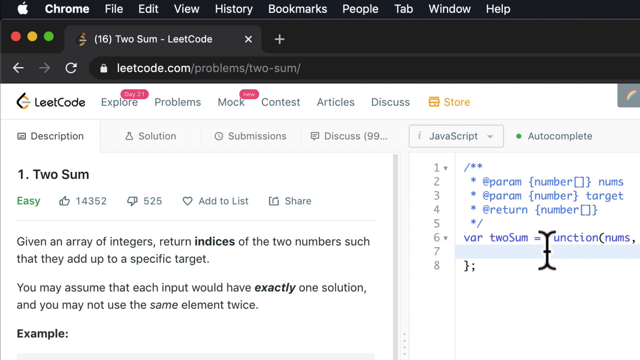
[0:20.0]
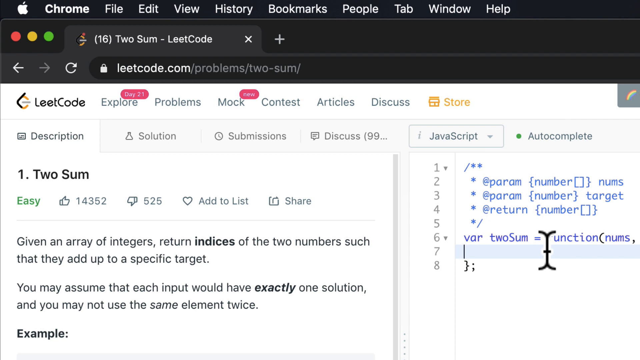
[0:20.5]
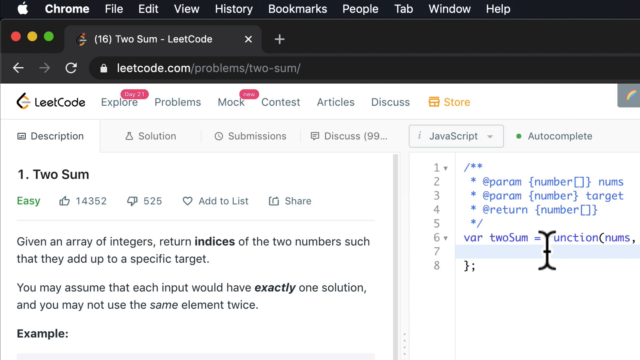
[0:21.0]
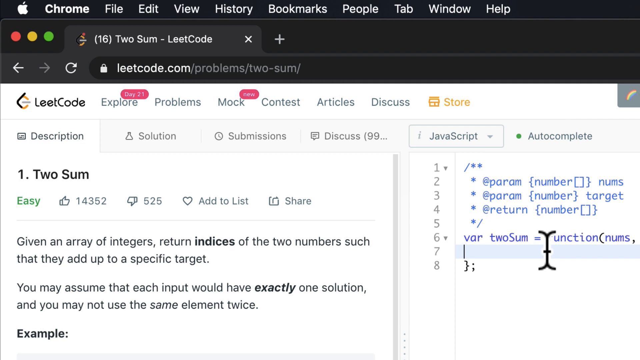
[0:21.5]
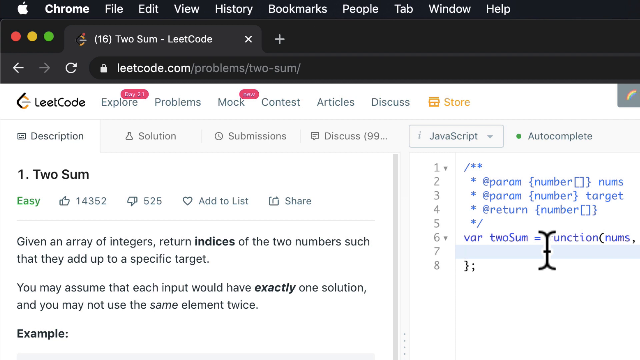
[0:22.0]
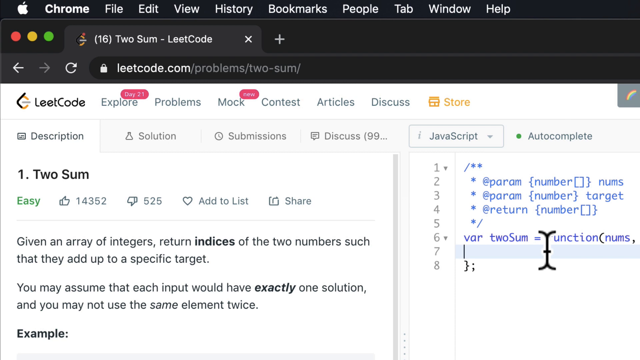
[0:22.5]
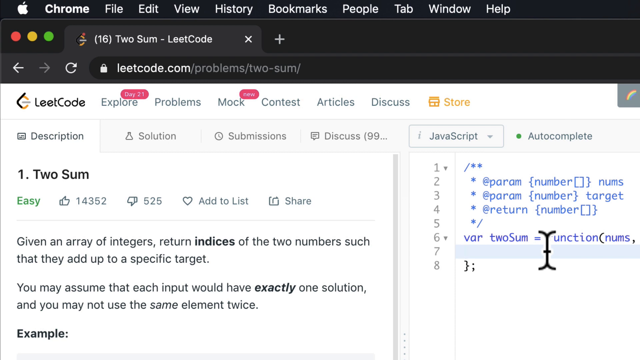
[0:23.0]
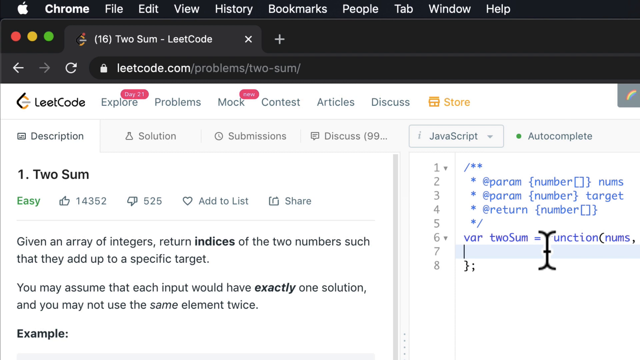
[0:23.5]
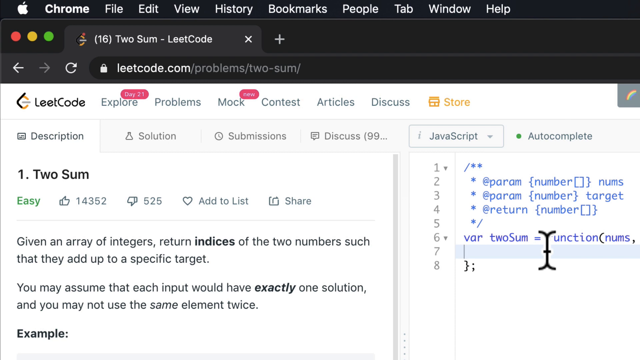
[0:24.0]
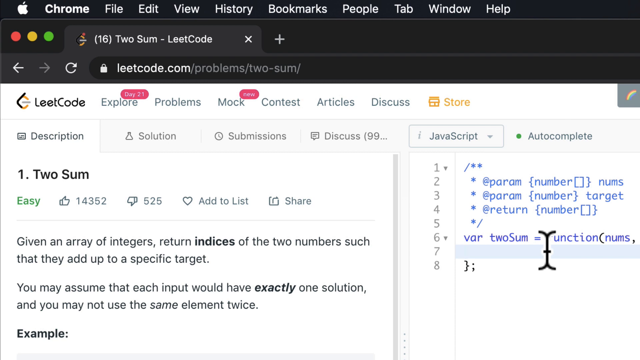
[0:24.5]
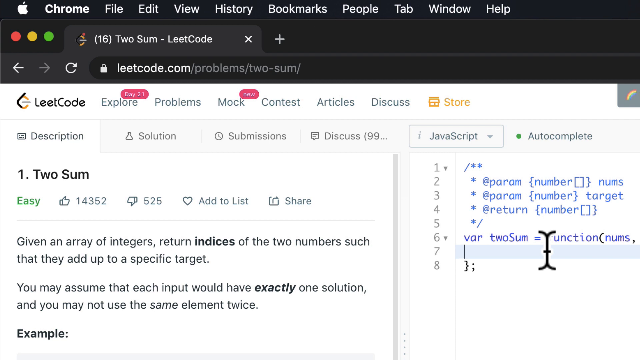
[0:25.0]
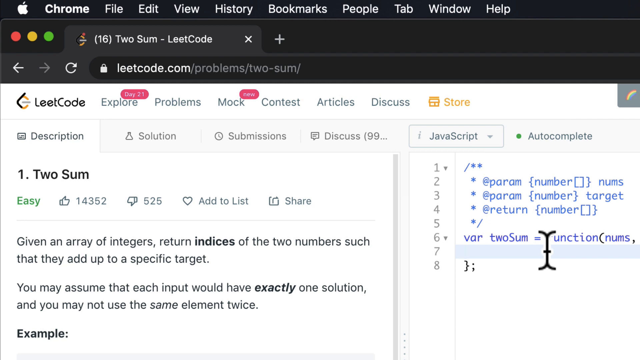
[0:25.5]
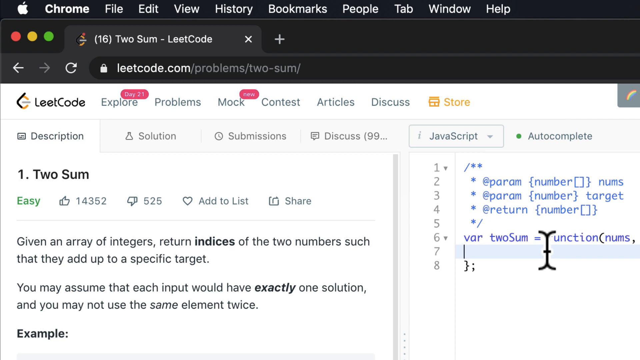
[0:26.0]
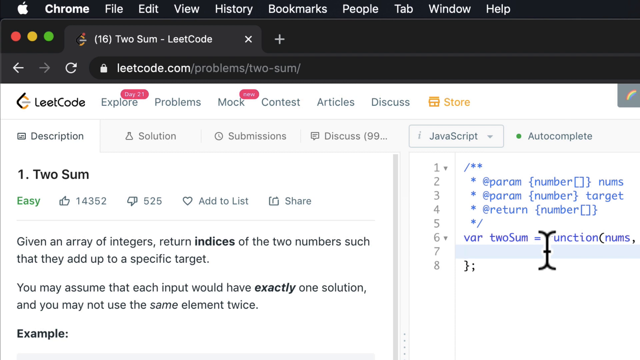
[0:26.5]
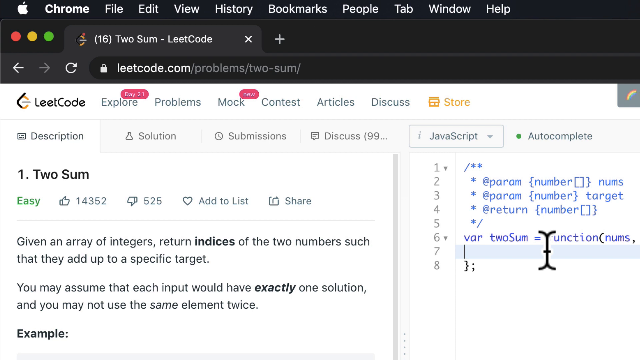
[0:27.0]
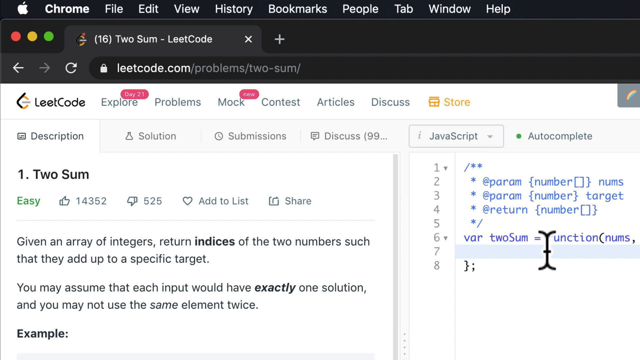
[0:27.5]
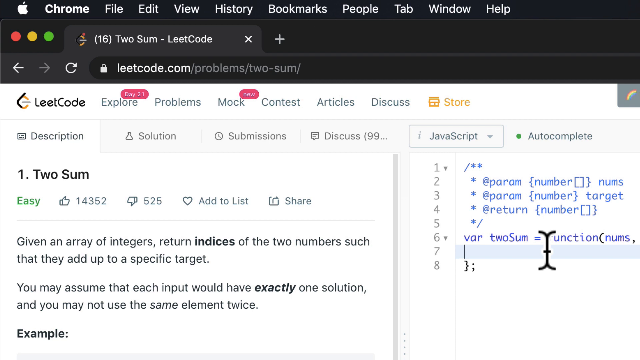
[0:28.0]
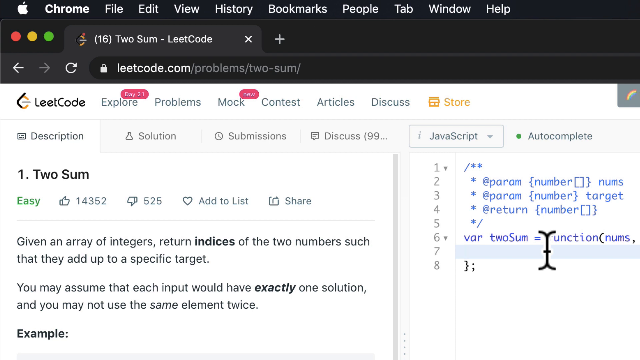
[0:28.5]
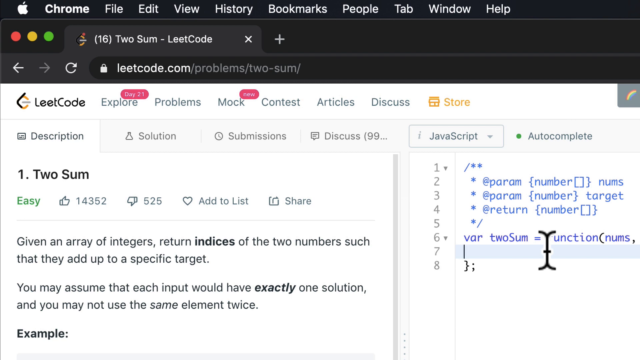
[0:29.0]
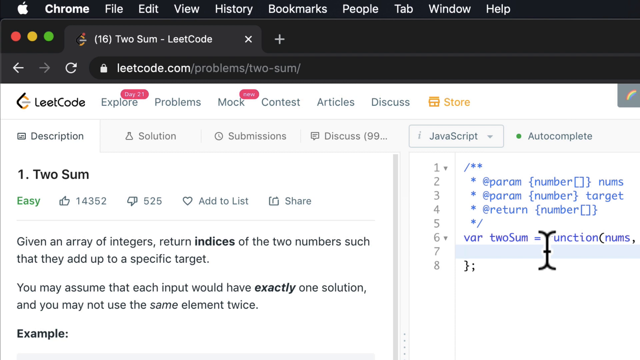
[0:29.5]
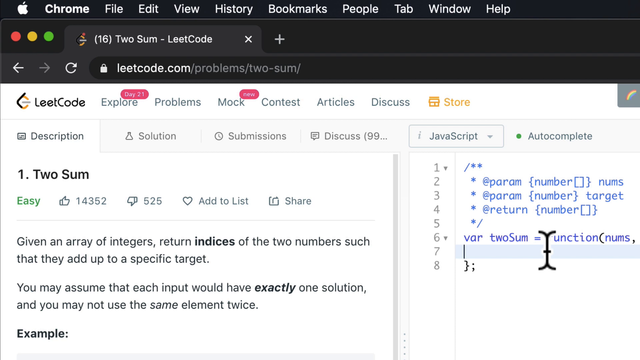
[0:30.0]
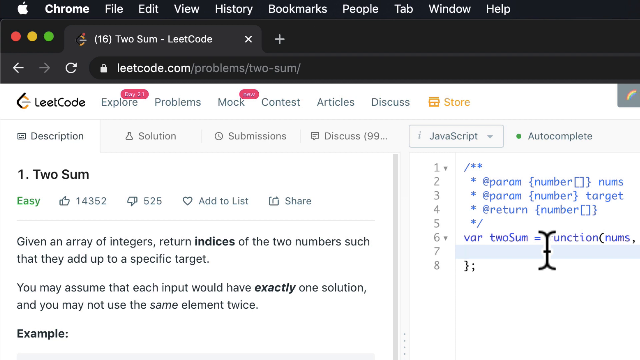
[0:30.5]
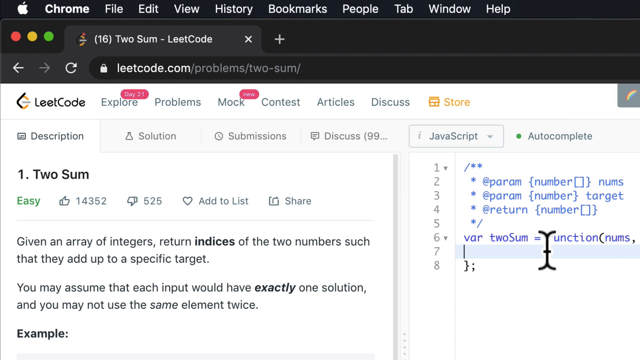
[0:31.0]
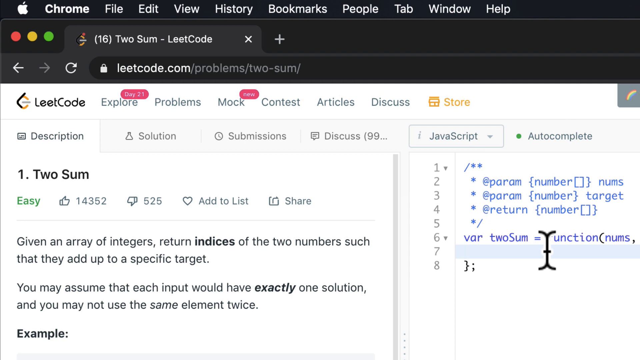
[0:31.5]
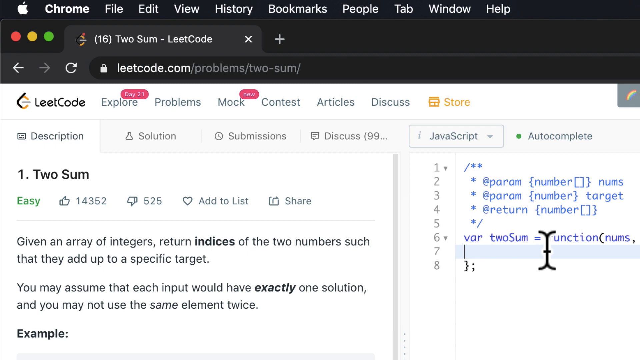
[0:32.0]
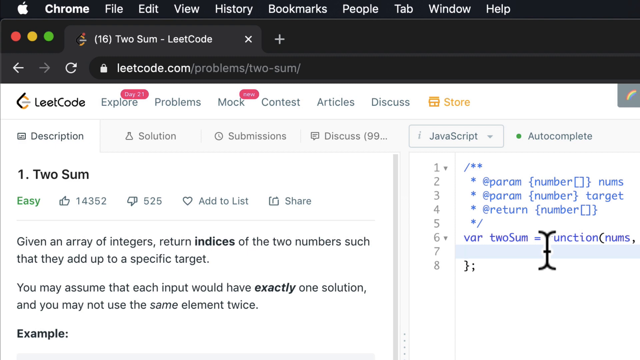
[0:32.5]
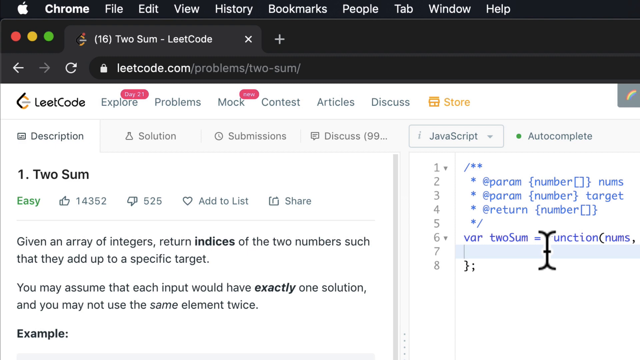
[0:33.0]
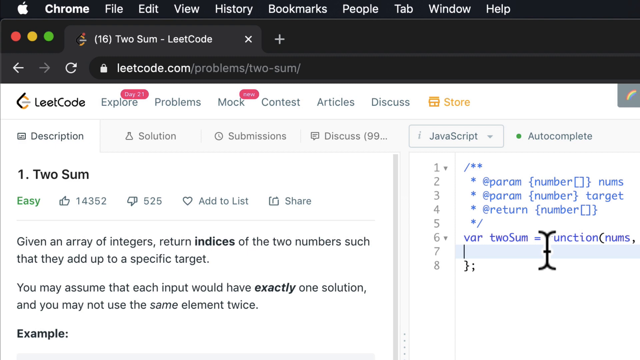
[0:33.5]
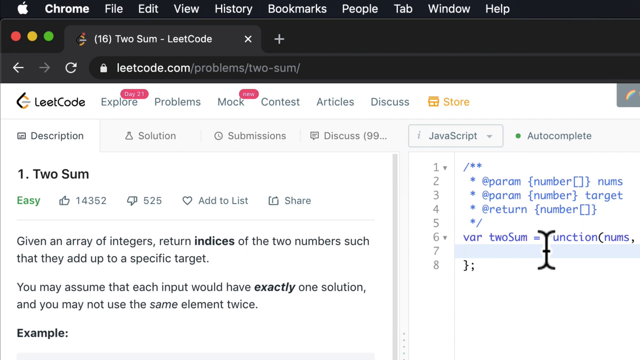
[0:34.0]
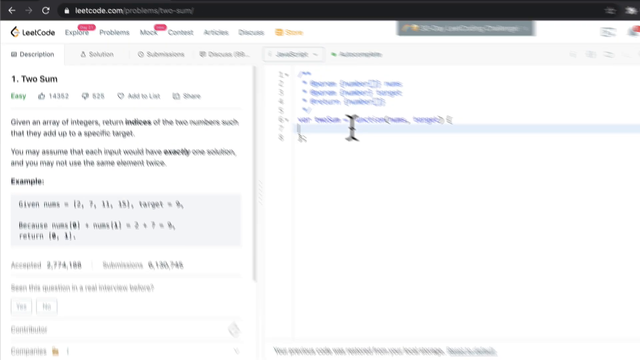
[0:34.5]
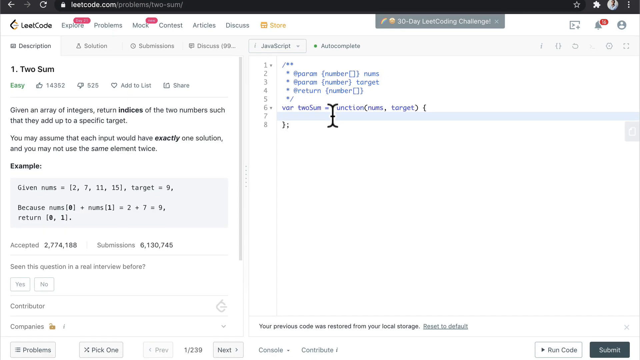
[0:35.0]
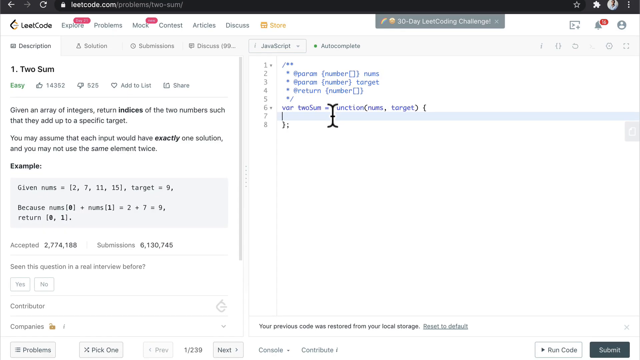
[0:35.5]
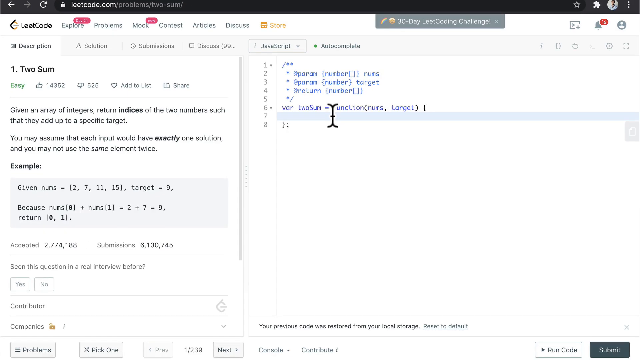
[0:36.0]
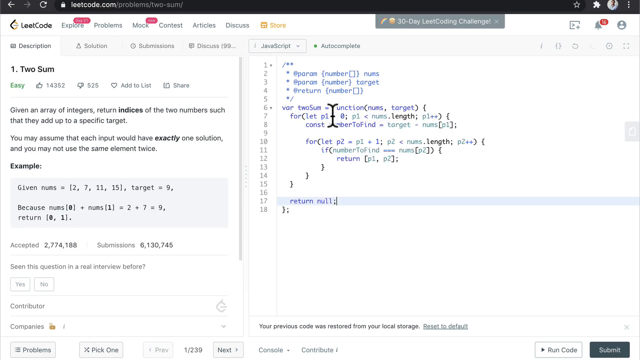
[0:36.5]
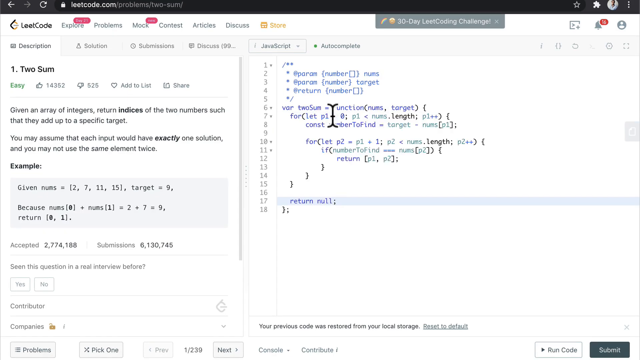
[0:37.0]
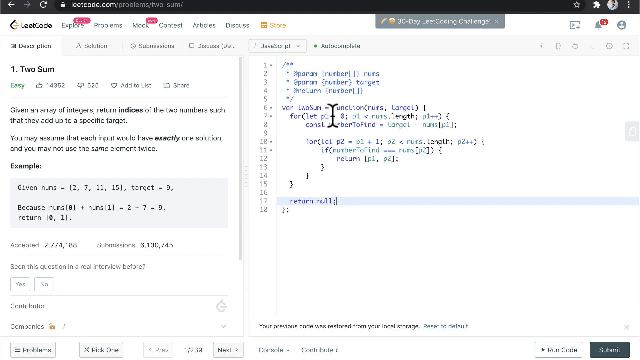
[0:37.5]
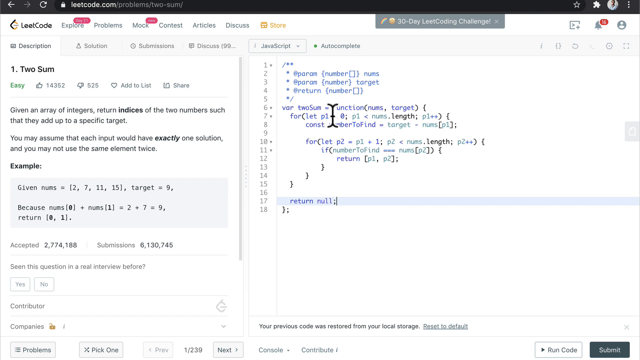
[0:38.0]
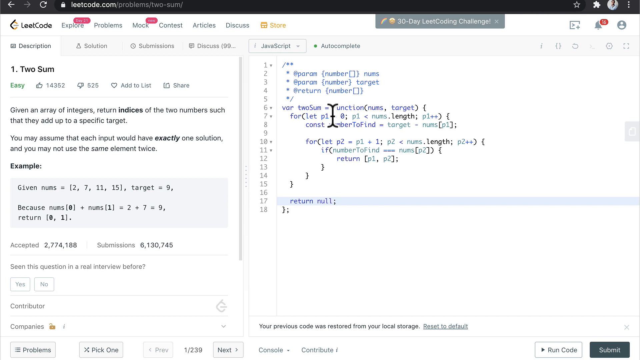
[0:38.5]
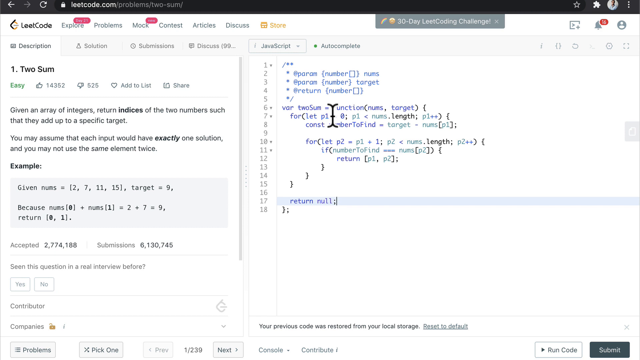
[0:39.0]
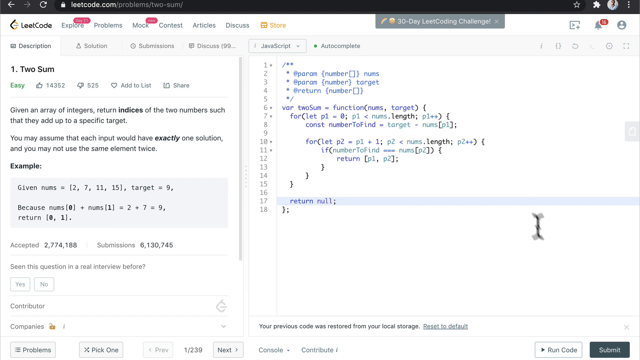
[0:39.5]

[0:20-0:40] The view stays zoomed in on the top left of the screen, still on two sum, which seems to be a coding description, with the name LeetCode. Under the two sum section the text reads: "given an array of integers, return indices of the two numbers such that they add up to a specific target. You may assume that each input would have exactly one solution, you may not use the same element twice." The screen then zooms back out to the full picture, and the person appears to paste some code into the document, a big block of code that appears underneath.